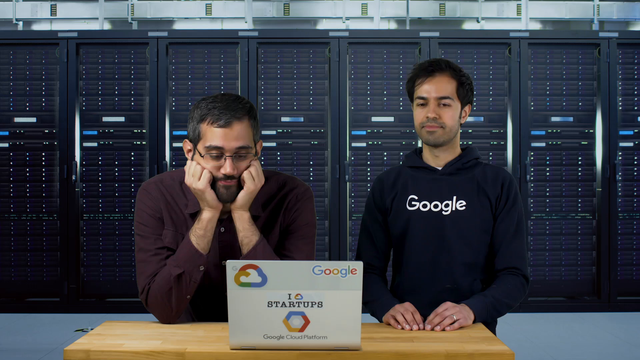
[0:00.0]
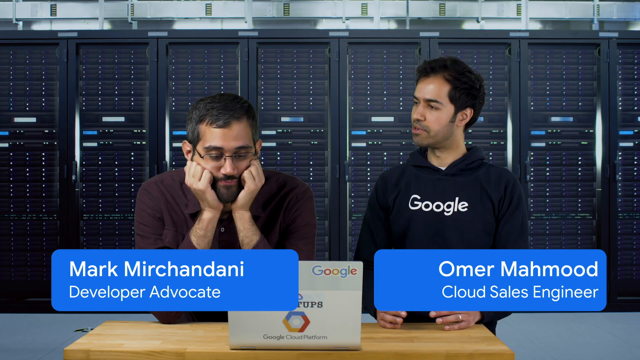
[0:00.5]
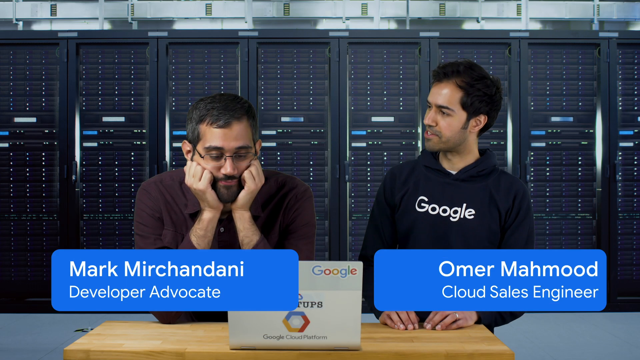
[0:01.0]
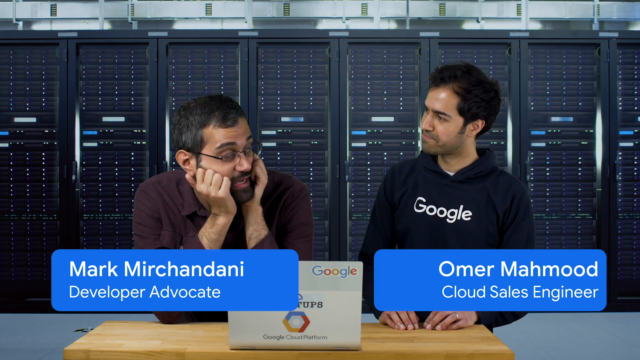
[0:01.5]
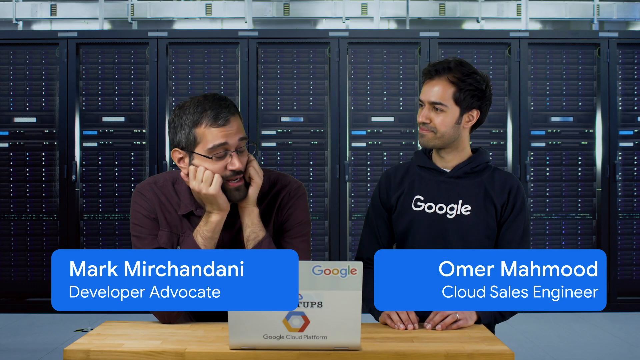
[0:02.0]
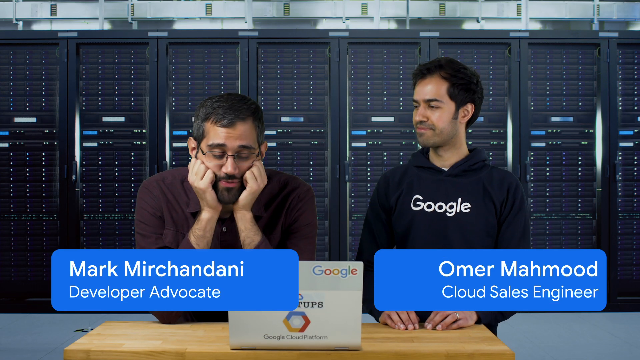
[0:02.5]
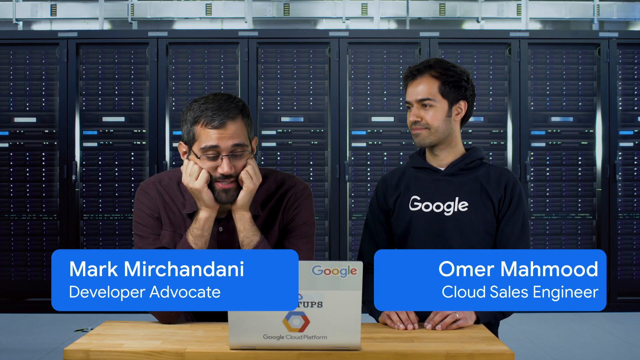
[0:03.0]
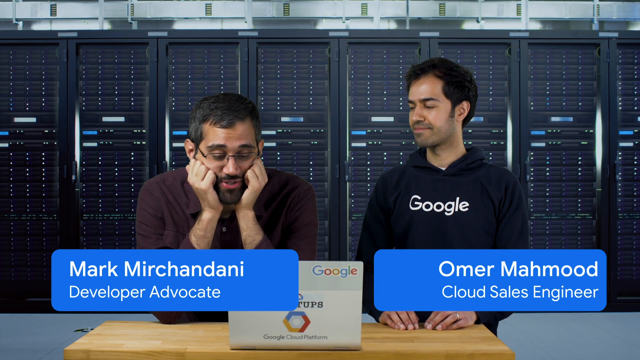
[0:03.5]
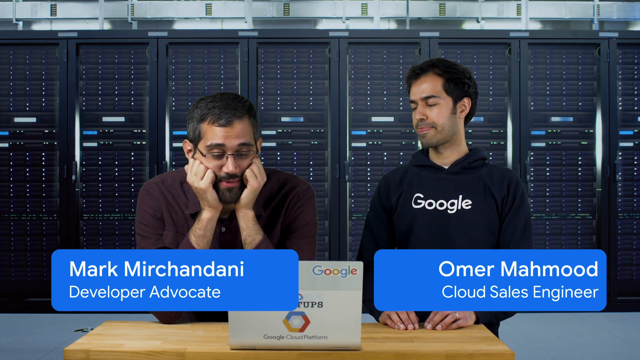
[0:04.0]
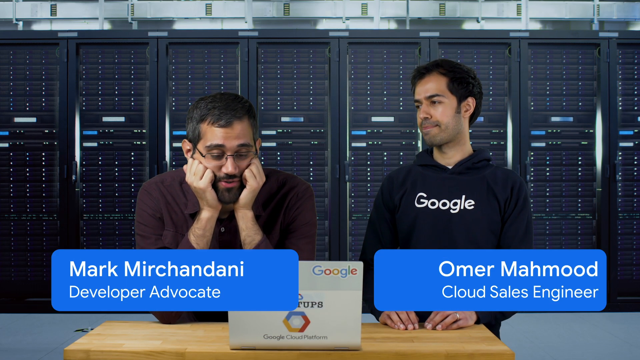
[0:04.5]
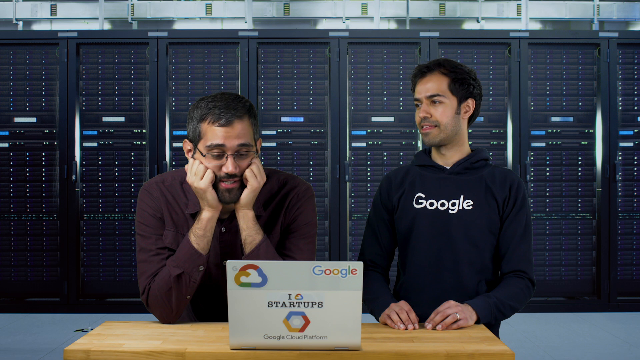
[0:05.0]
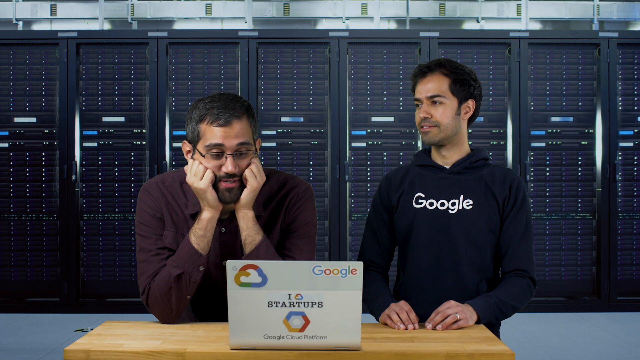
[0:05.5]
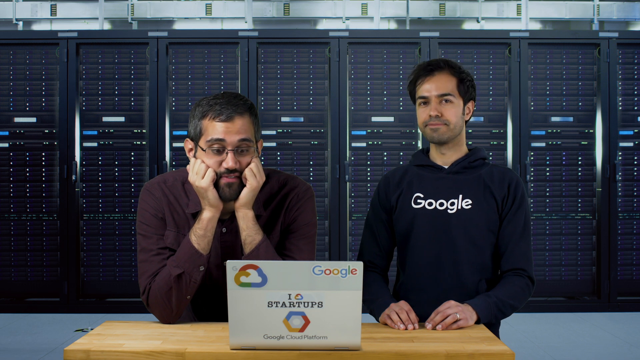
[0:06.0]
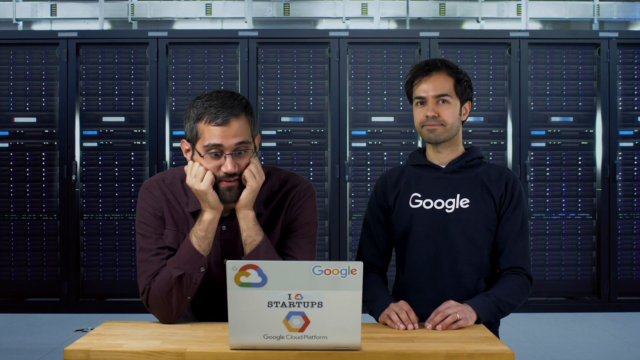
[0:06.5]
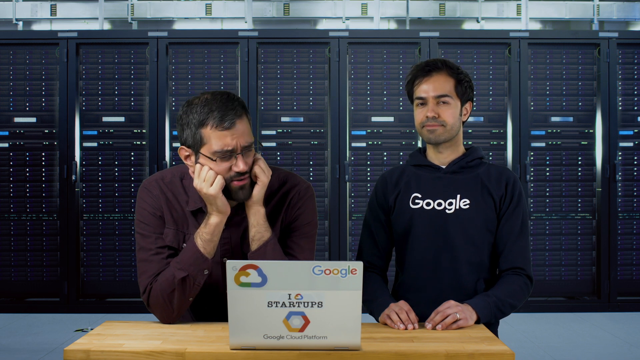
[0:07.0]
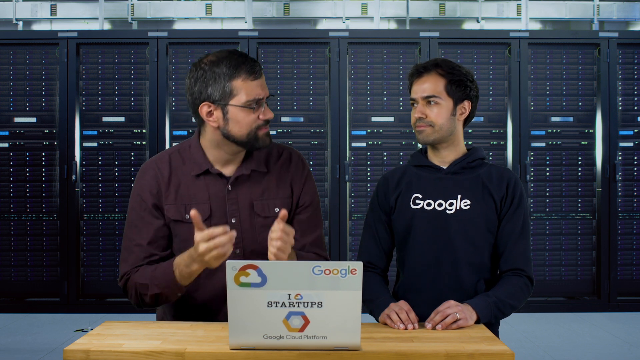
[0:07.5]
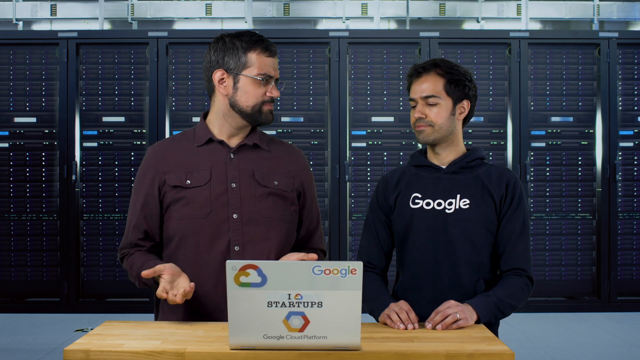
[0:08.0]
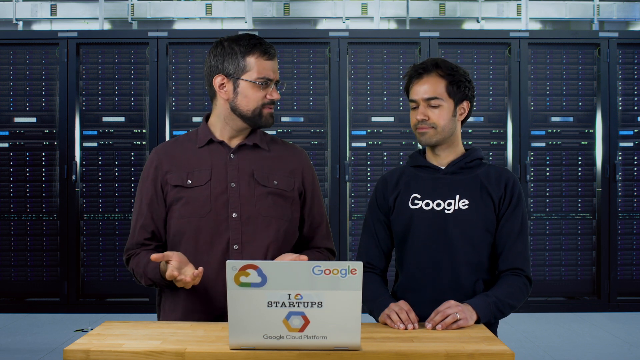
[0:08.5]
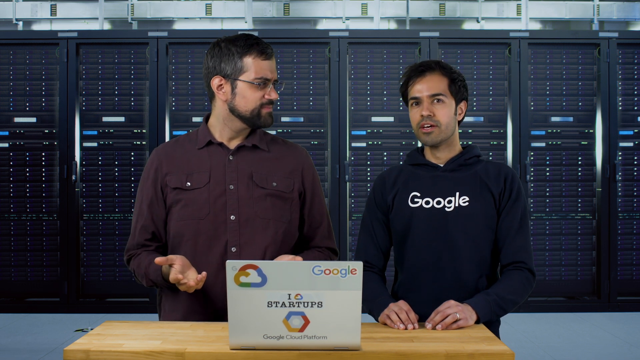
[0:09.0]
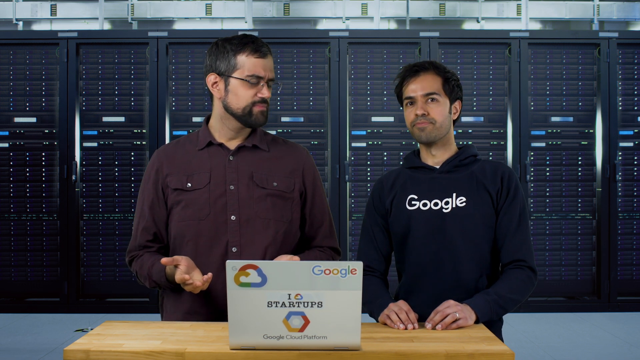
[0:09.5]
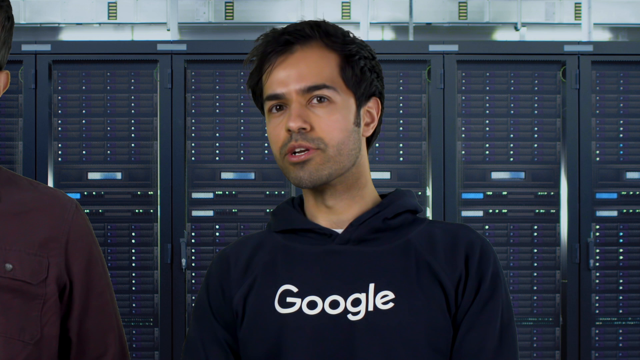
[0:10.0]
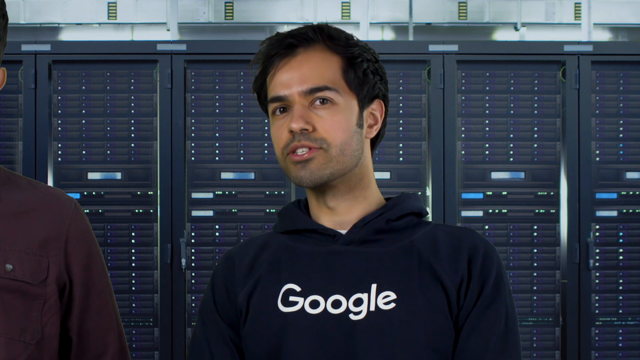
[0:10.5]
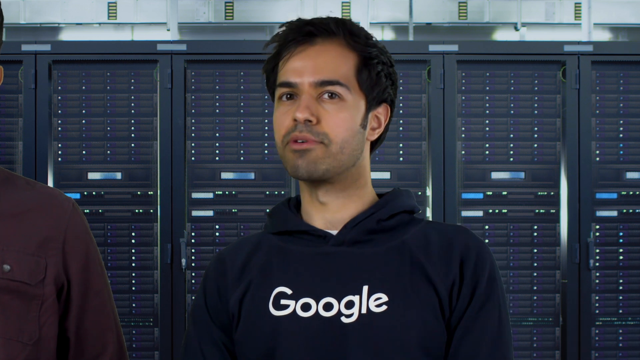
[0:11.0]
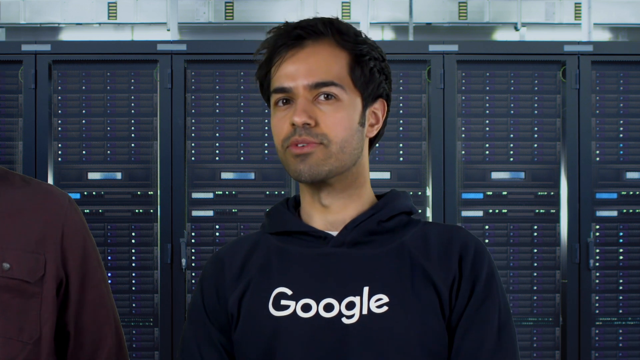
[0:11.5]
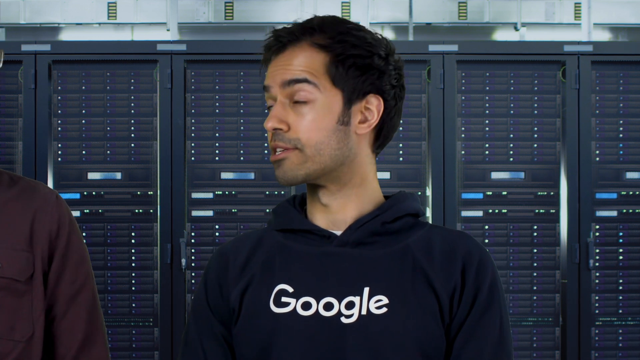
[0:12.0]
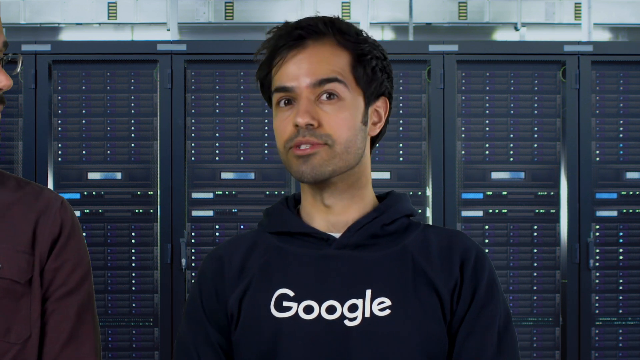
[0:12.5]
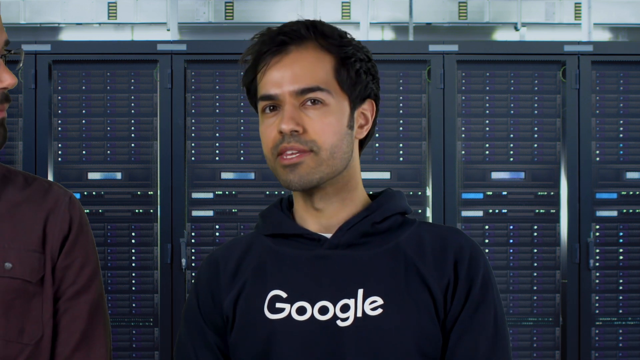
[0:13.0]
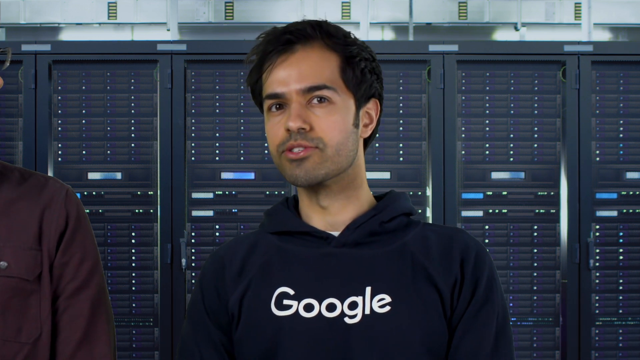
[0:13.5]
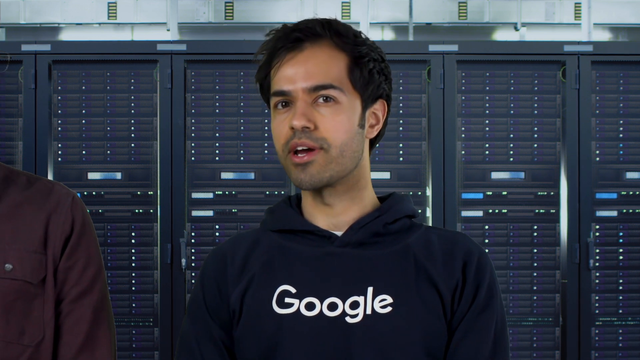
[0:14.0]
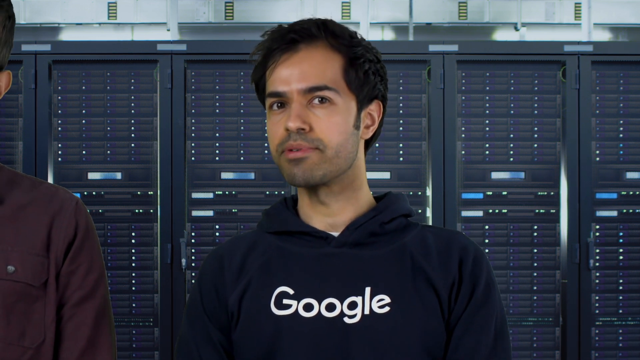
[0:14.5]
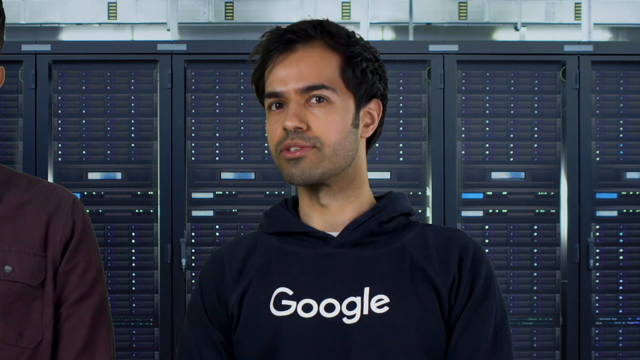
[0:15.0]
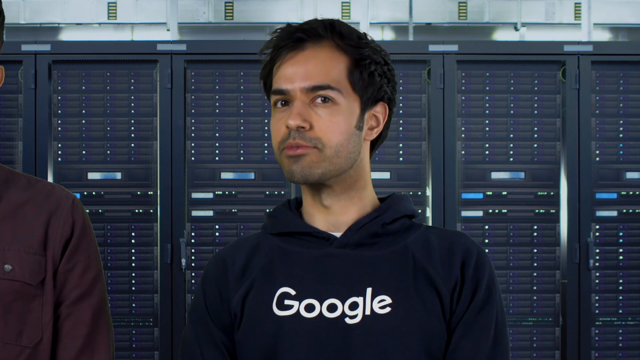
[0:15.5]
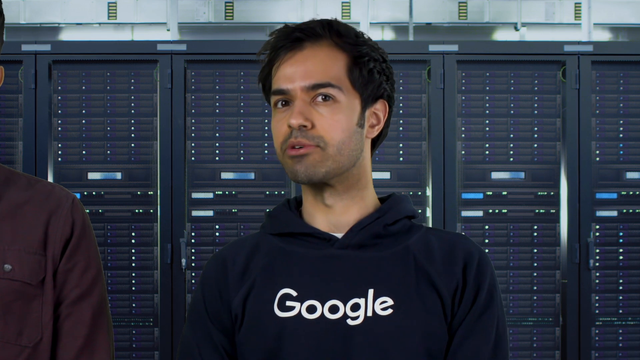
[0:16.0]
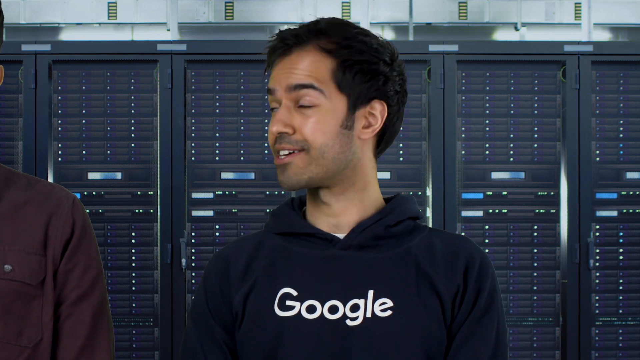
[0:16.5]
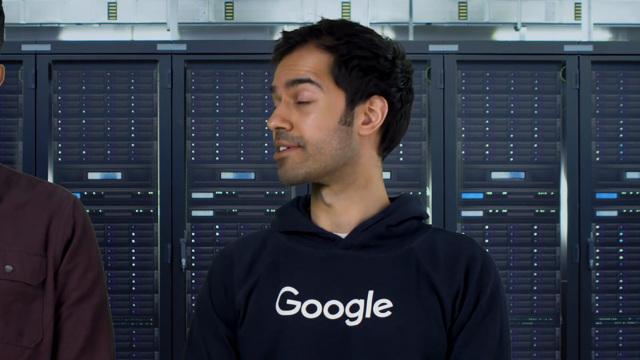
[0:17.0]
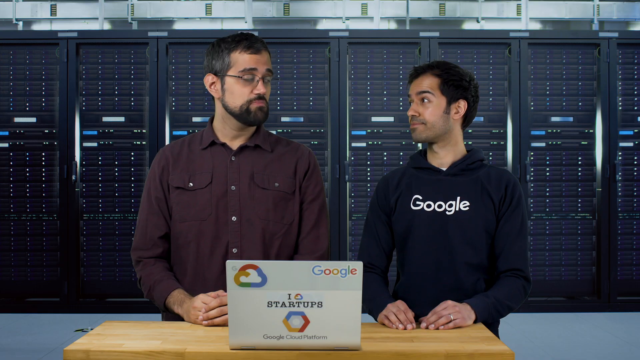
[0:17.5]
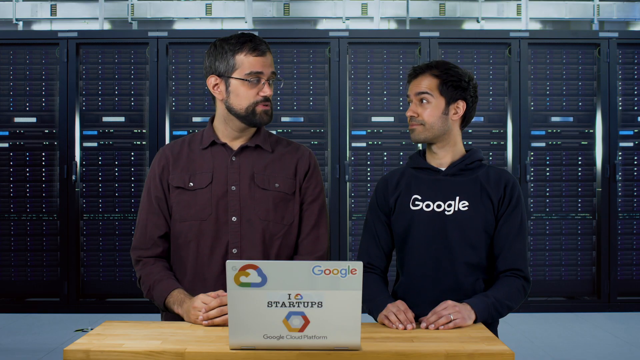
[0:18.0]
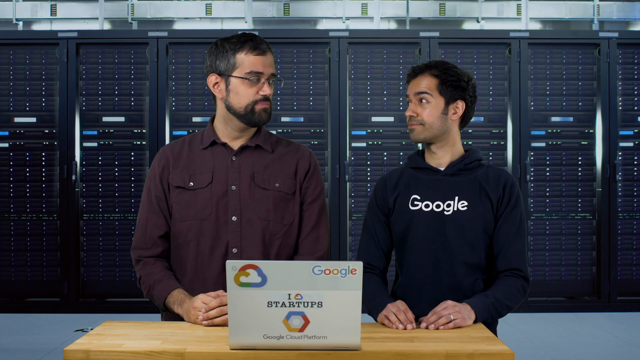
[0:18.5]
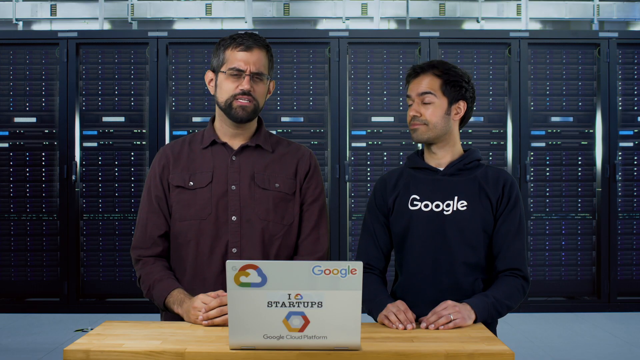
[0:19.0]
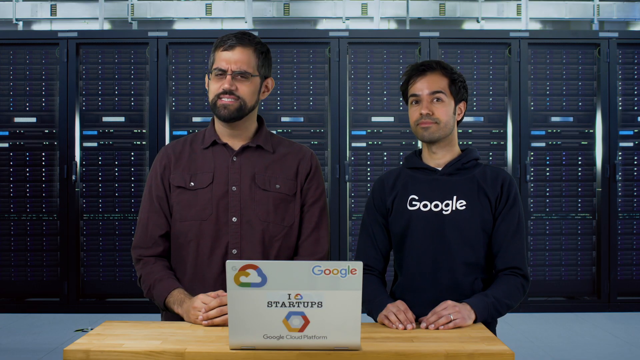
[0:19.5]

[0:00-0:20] Two men stand in what seems to possibly be the internal area of a data center. One wears a black Google hoodie and looks to be maybe in his mid 20s. Next to him is another man who looks to be possibly in his early 30s, with glasses and a short haircut; he has his hands underneath his chin to support himself. Both seem to be looking at a laptop with Google logos on it: one says "Google" and the other says "I love startups." Their names are flashed across the screen, and from their titles they look like they are part of the staff. The two then have a conversation with each other around the table.